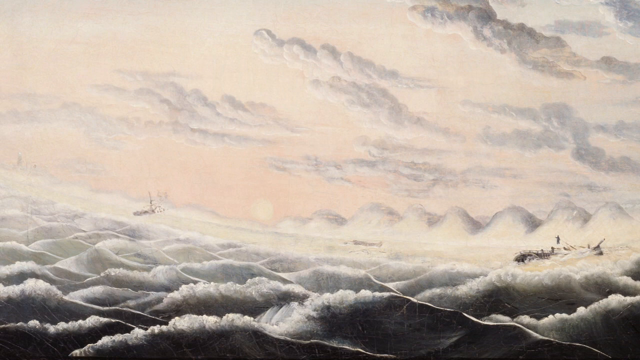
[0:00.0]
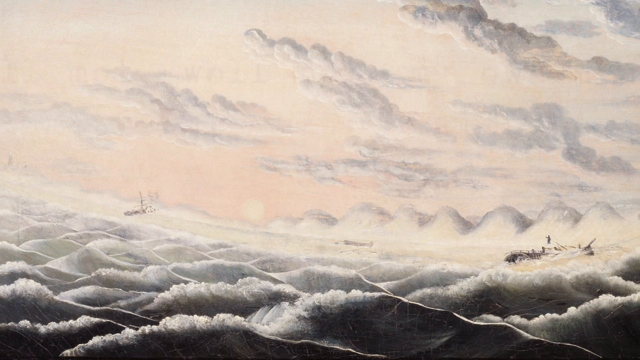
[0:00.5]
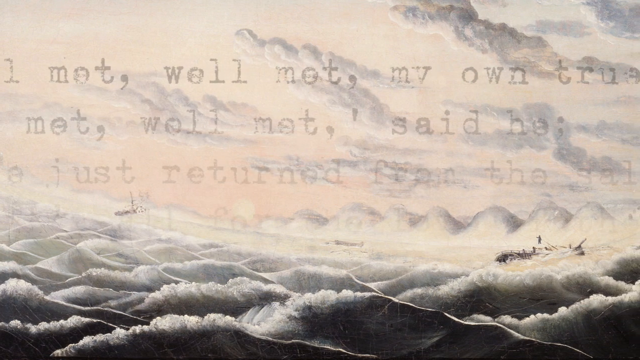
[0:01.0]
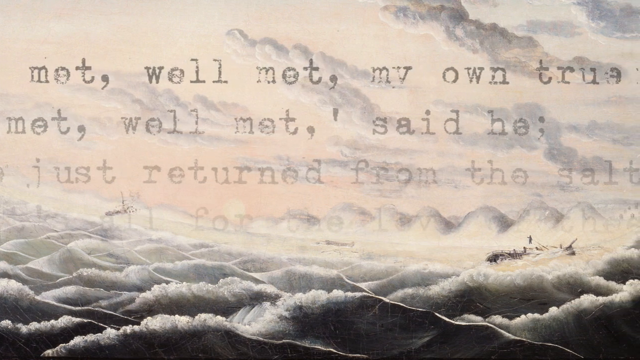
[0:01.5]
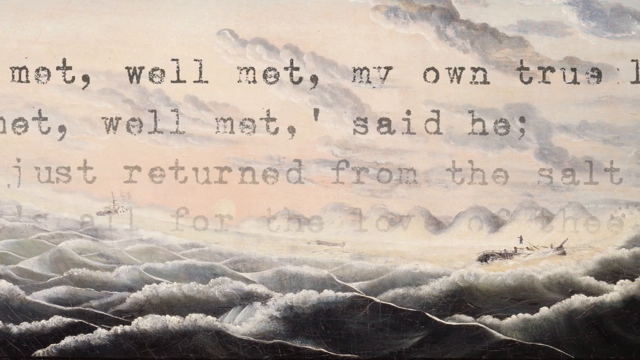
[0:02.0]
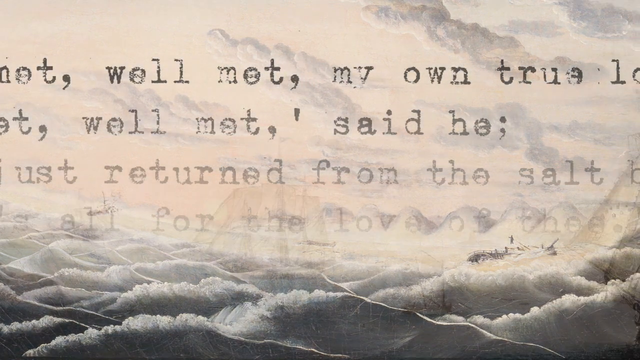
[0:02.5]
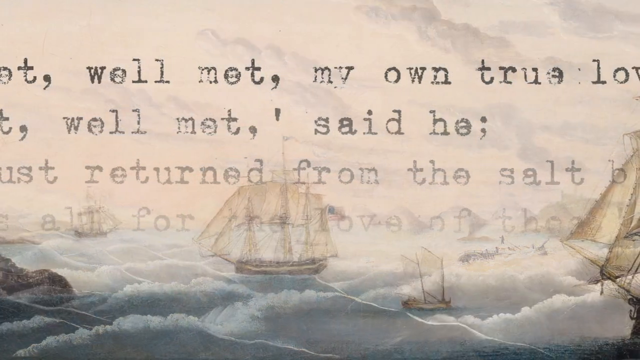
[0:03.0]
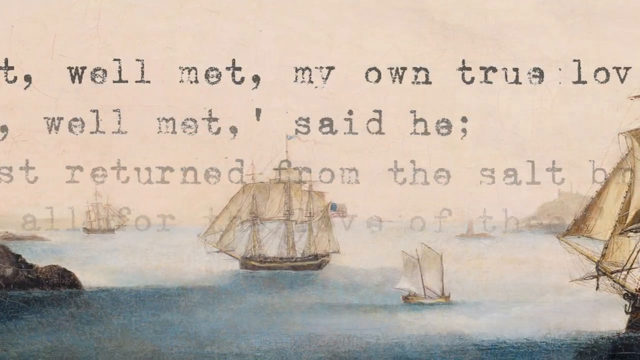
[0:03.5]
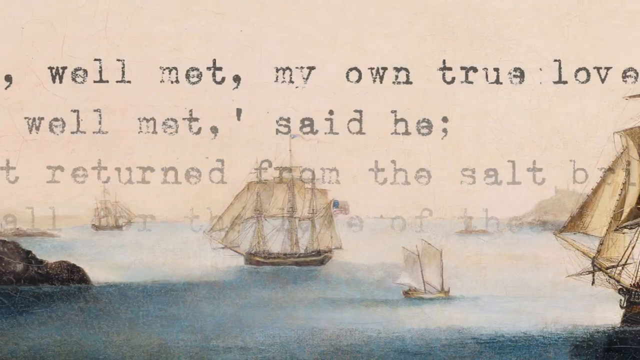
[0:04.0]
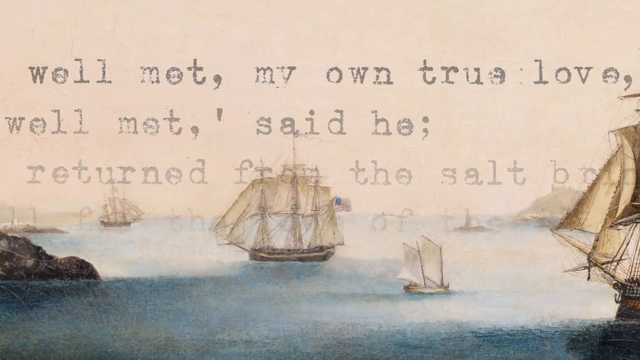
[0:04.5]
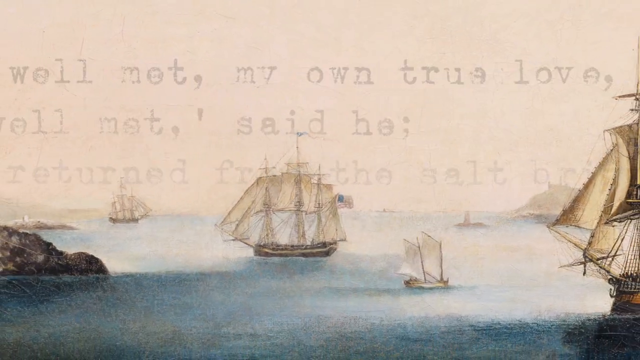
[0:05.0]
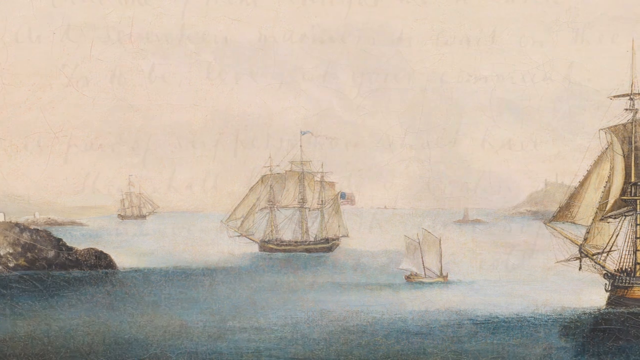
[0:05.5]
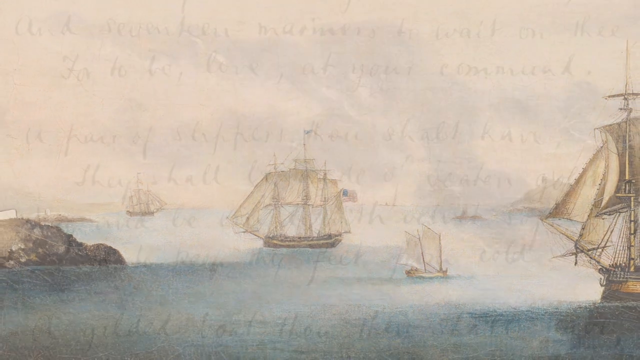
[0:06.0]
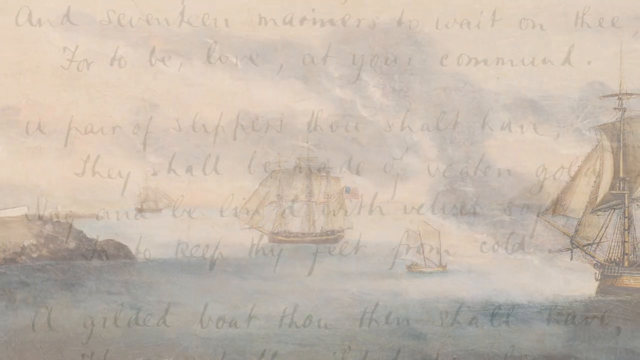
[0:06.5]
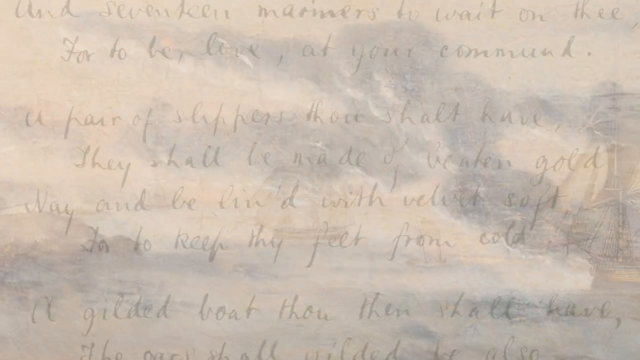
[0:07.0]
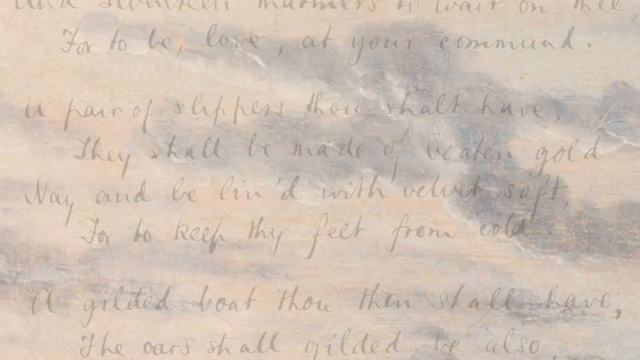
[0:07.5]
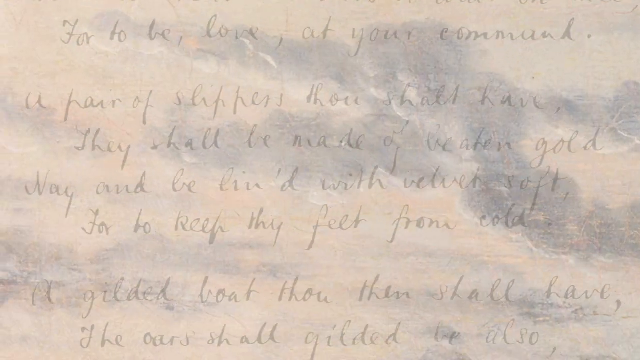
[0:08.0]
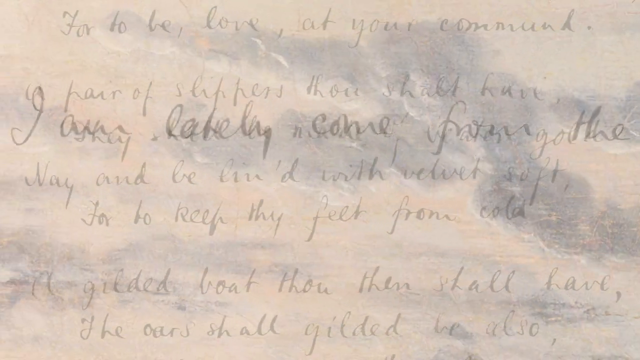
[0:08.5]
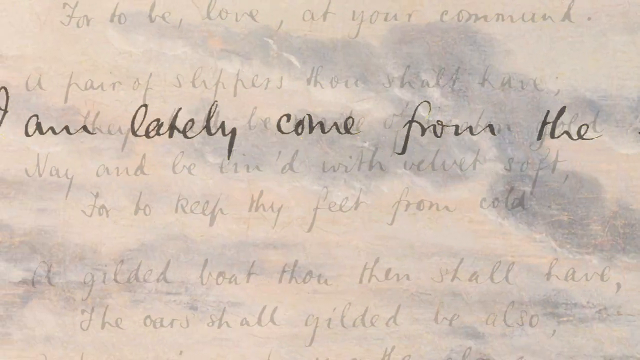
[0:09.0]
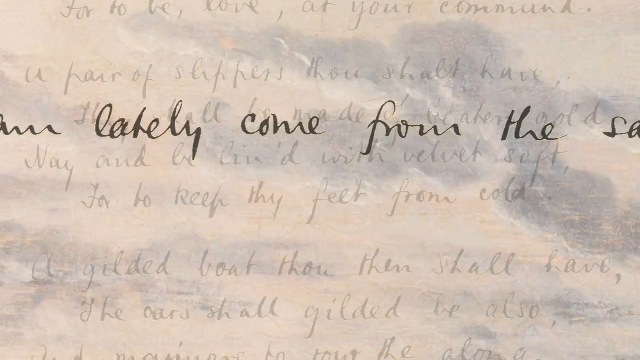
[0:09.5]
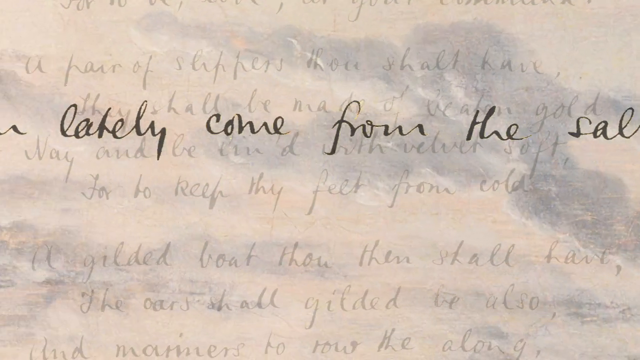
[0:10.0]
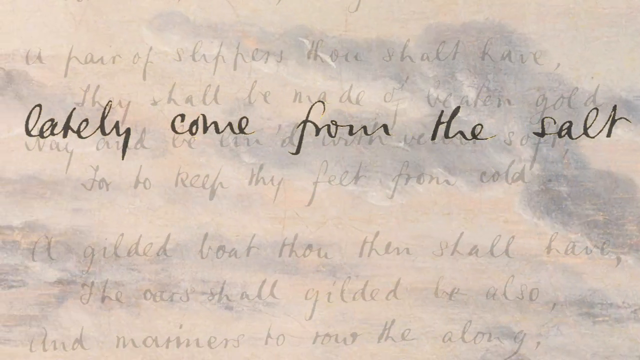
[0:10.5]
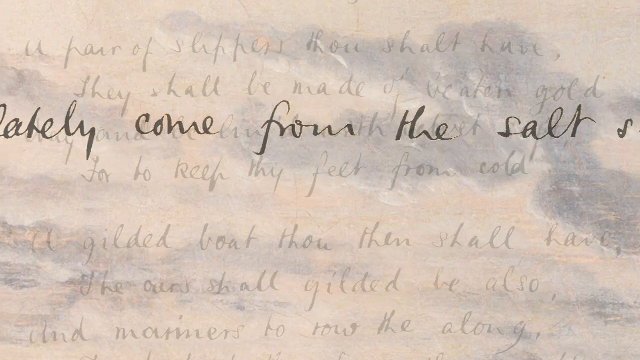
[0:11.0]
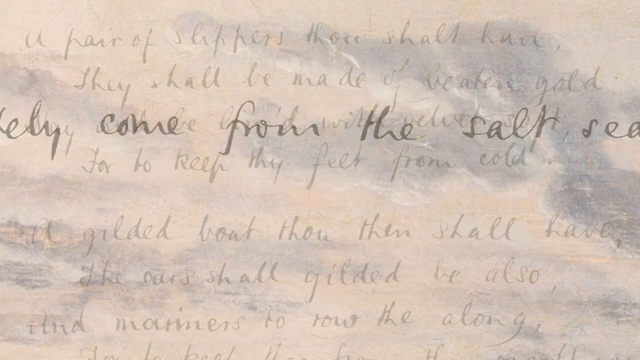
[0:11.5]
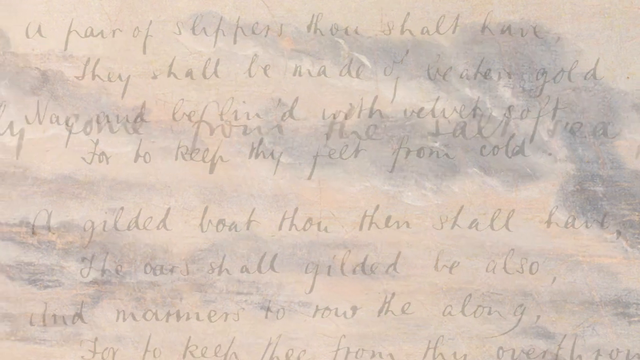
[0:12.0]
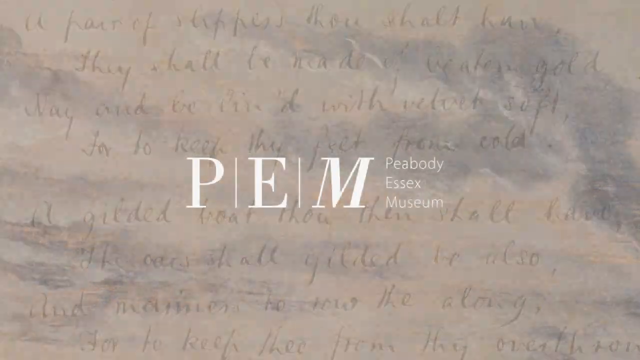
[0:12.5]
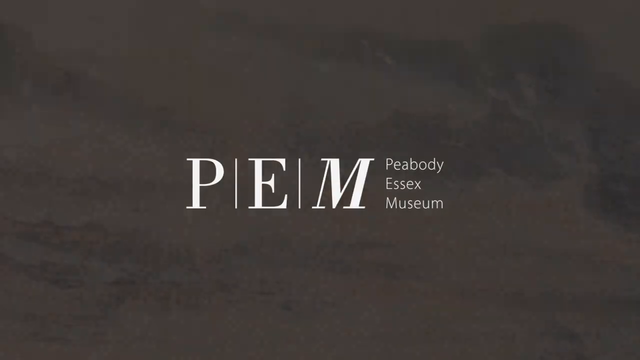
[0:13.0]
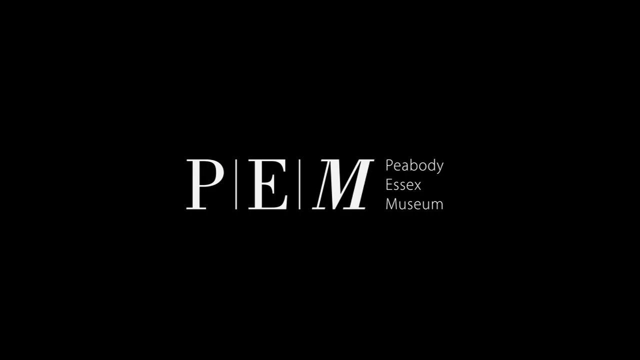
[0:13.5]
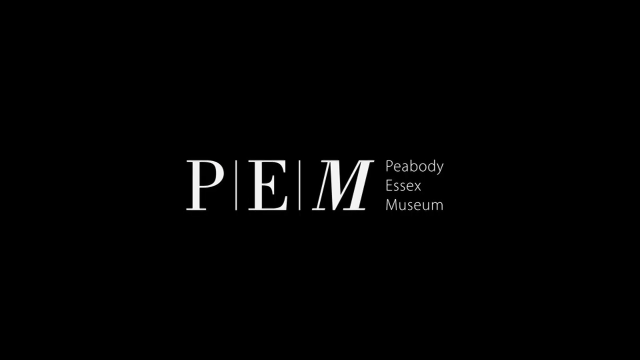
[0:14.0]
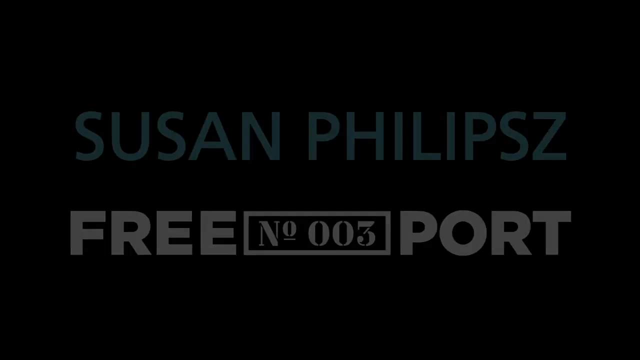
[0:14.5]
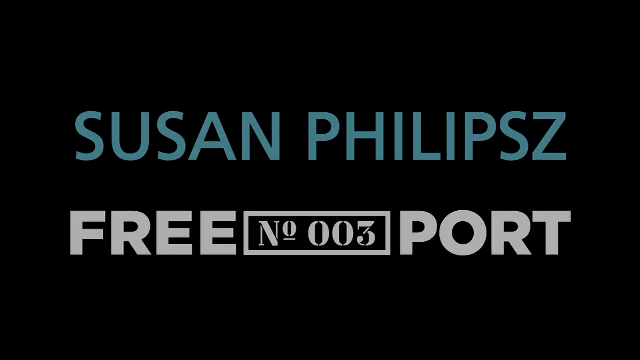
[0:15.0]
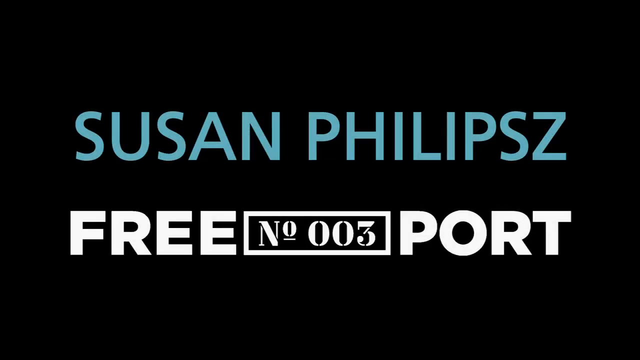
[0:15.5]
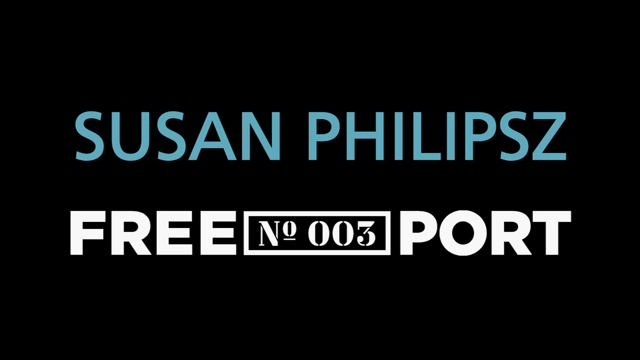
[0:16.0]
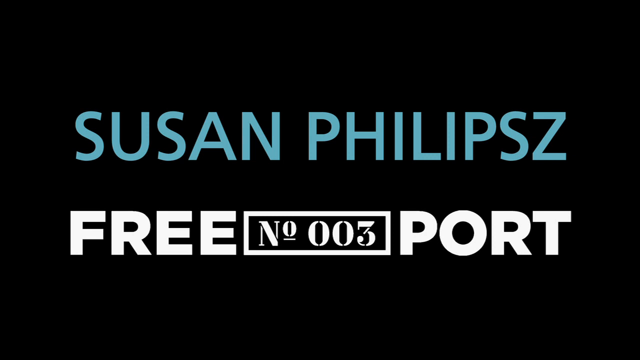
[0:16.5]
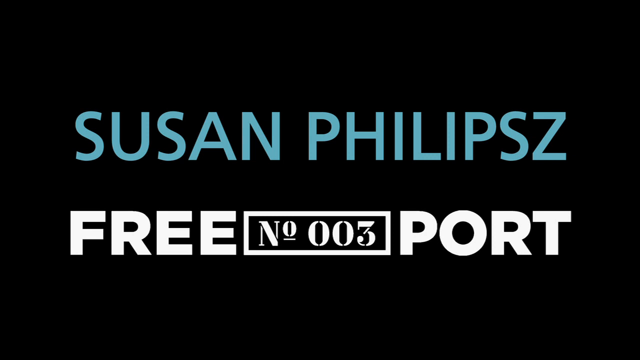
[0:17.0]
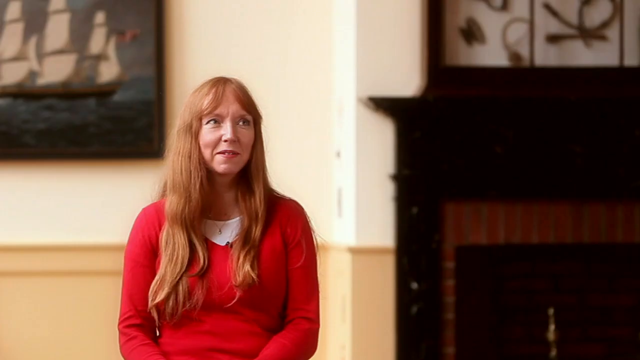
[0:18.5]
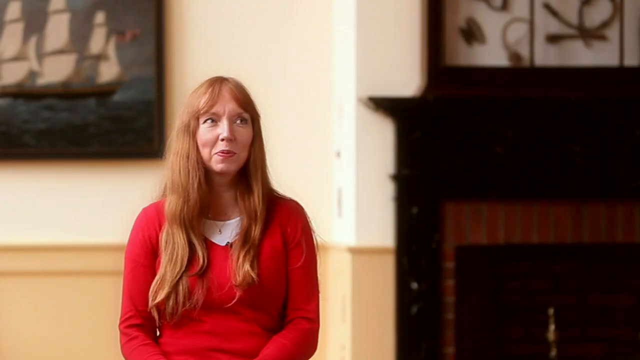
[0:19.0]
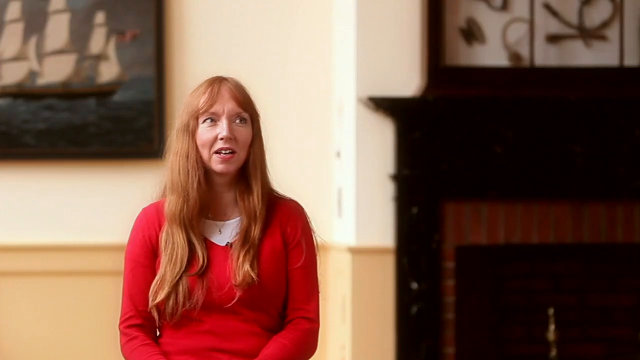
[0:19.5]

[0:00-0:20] What looks like a painting appears on screen; it is unclear whether it shows clouds, a sea setting, or possibly both, with sea at the bottom and clouds at the top. On the right-hand side there is something that may be some type of ship. Black text pops up that includes the words "My own true." The video cuts to a different angle where the subjects are clearly old sailing ships; one in the center has a US flag fluttering to the right. Some handwritten writing appears, apparently mentioning something "from the salt" and then "Pete." A black background follows with the letters "P E M," then "Freeport," and then "Susan Phillips," with the name ending in an S and a Z. The video cuts very quickly to a picture of a woman who appears to be talking.